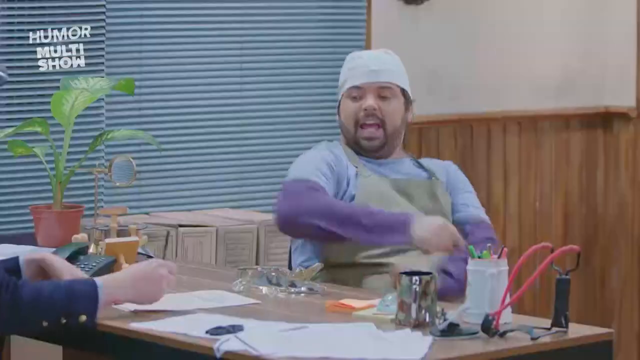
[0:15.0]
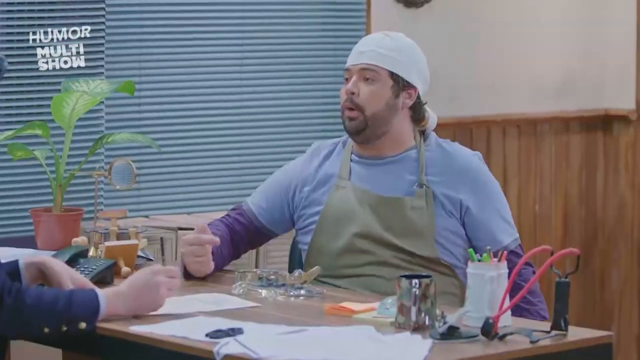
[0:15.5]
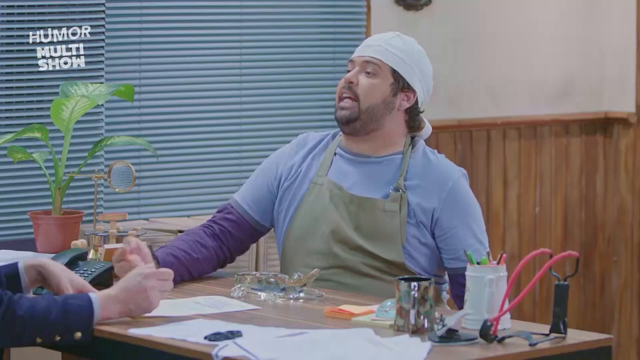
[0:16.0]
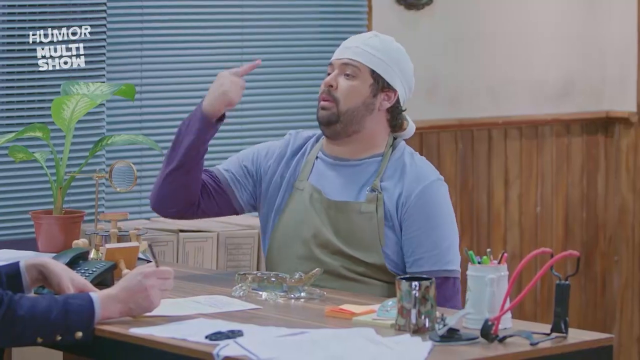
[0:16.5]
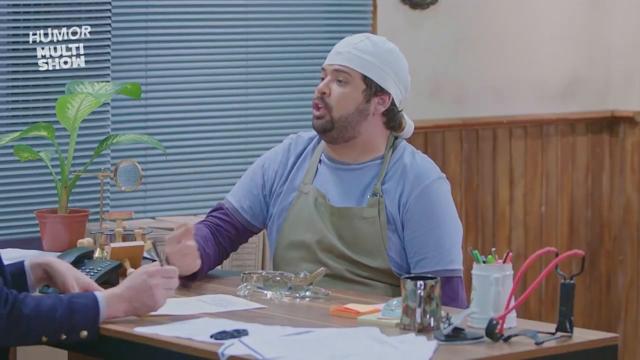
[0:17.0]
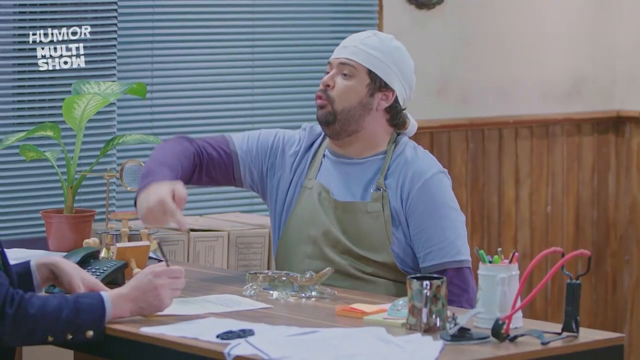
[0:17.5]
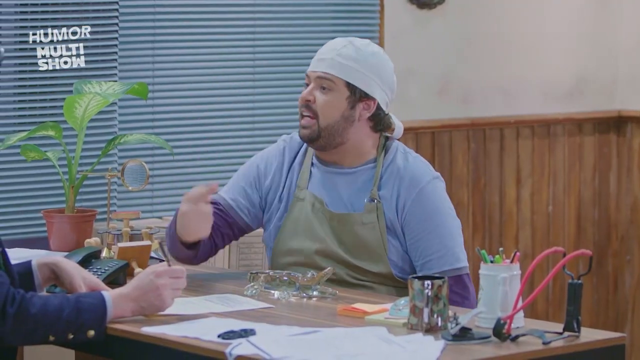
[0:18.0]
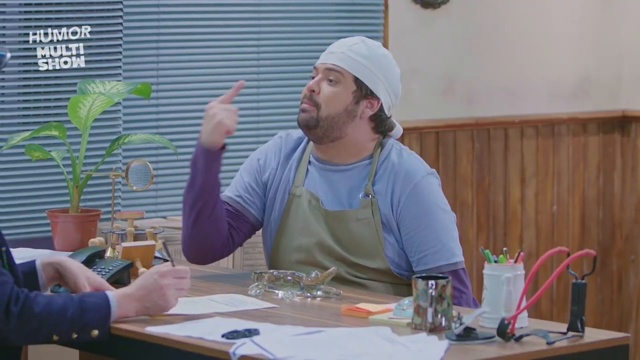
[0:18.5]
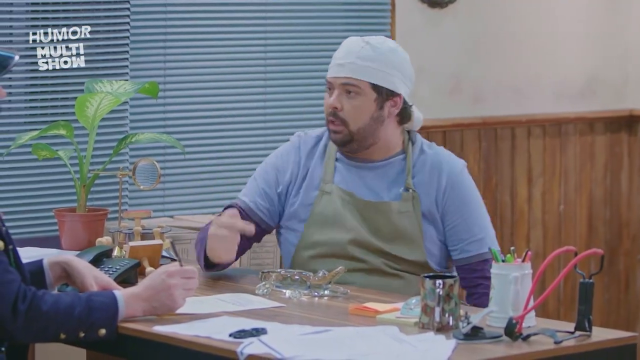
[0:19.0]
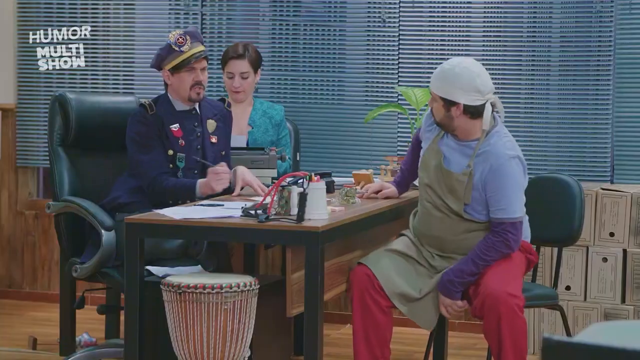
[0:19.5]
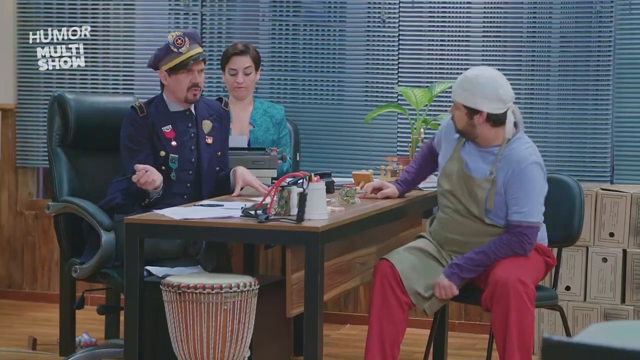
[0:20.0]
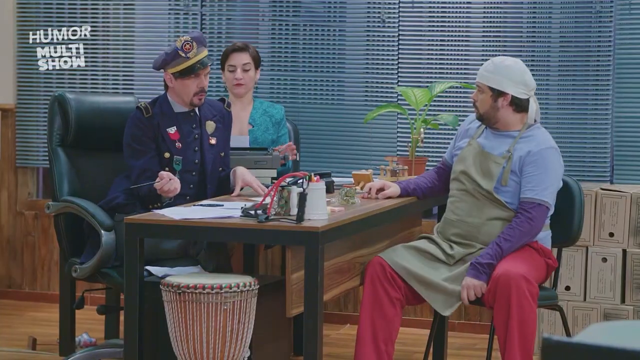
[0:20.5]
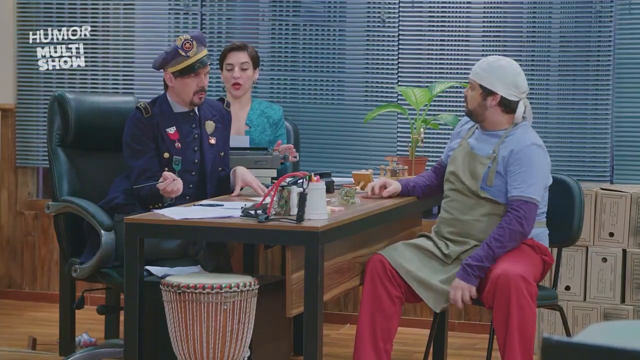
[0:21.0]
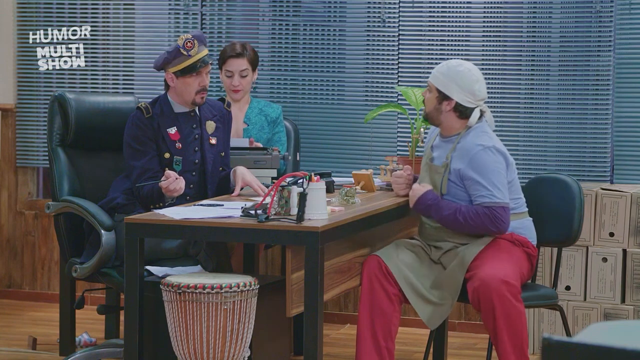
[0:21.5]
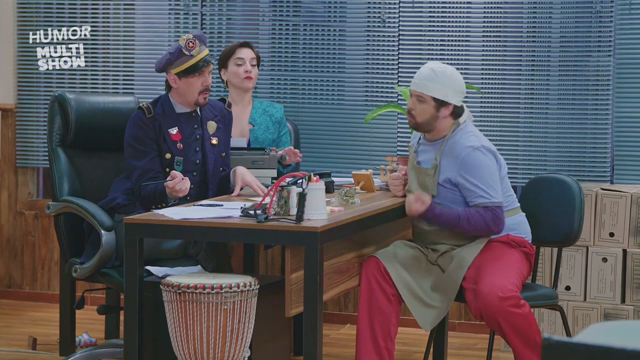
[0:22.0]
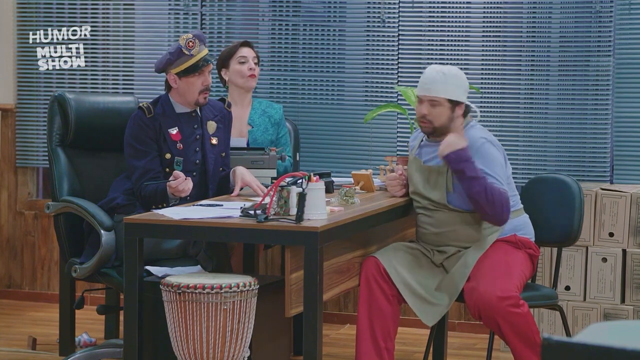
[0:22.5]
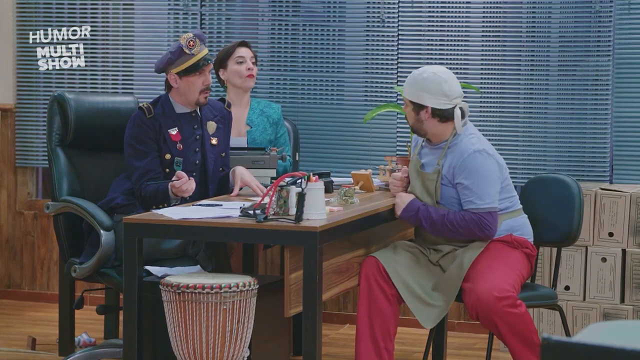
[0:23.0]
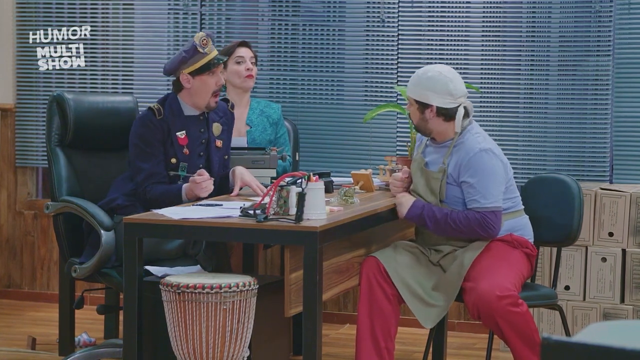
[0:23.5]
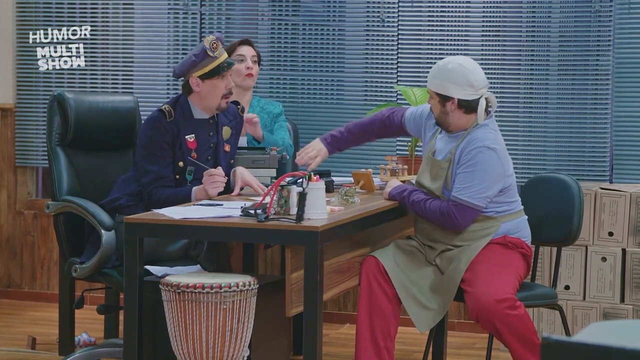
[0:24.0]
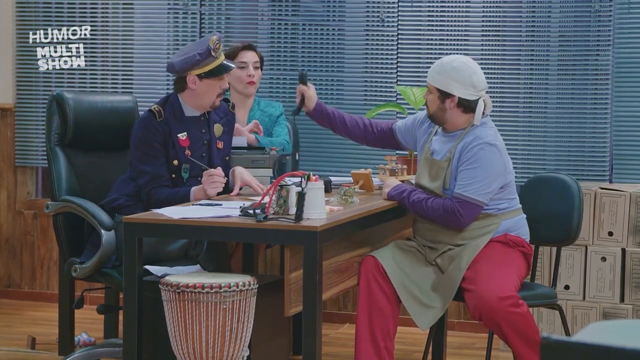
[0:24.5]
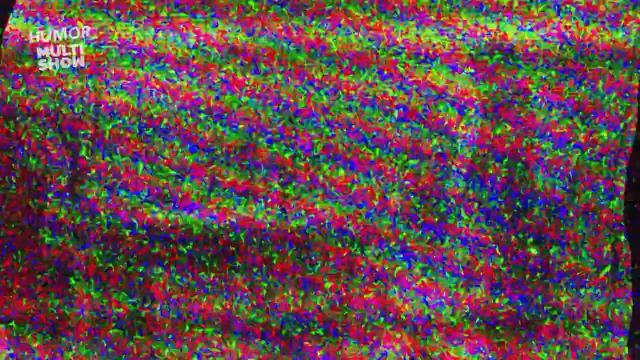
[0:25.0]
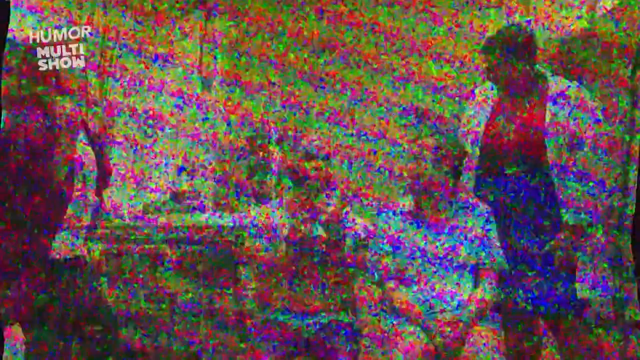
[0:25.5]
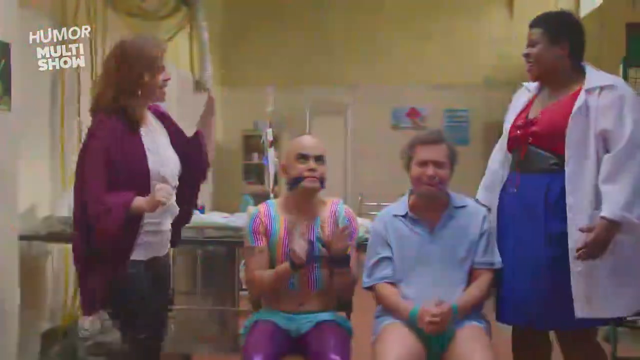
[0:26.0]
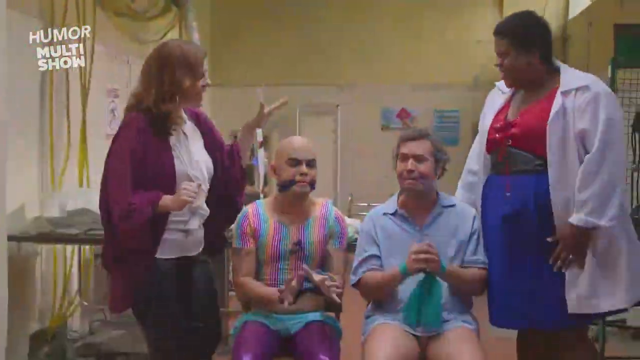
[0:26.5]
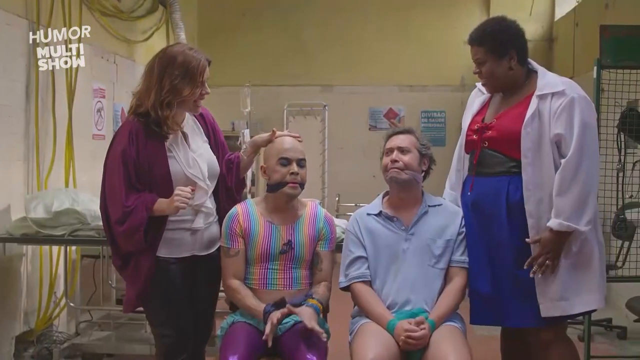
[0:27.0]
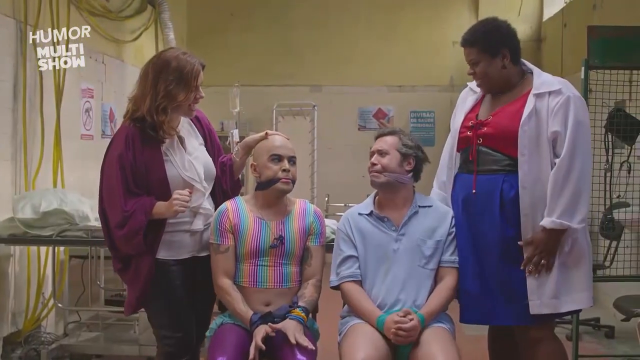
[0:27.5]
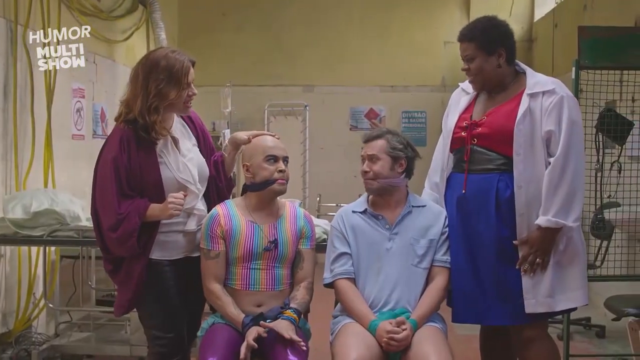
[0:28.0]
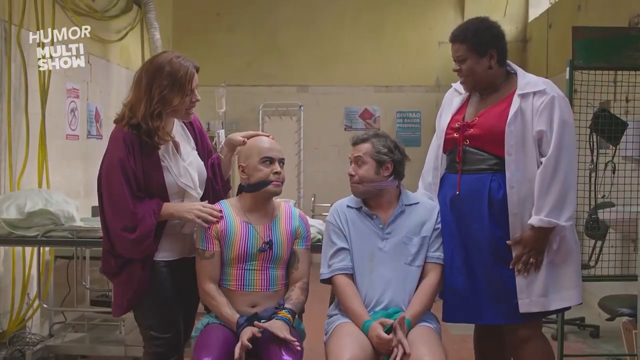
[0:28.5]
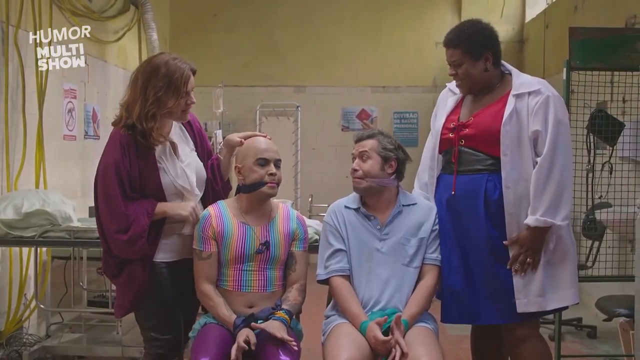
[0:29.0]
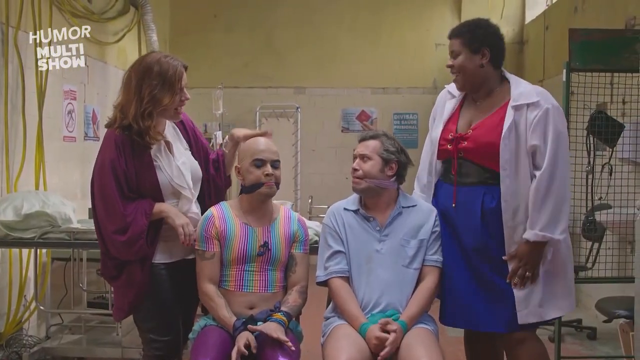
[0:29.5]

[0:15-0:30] The sketch is Denuncia Amadeus and XUXETA. The three people are still in the office, including the man in the uniform and the man in the surgeon's hat. They seem to be fussing, and the man in the surgeon's hat seems a little upset. The scene jumps to two ladies: a big black lady who seems to wear a dress and a white jacket, and a white lady on the other side. They are standing next to two seated men who seem to have their mouths and hands tied up. The ladies do not seem to be trying to hurt them; they are laughing at them. Back in the office, the man in the surgeon's hat hands the telephone to the man in the military suit, seemingly wanting him to make a phone call. Wavy lines transition from one scene to the other.